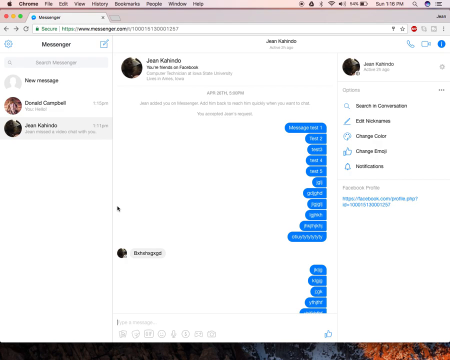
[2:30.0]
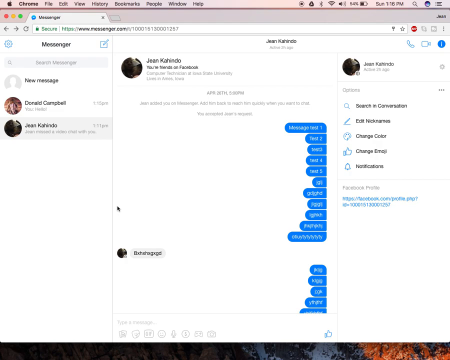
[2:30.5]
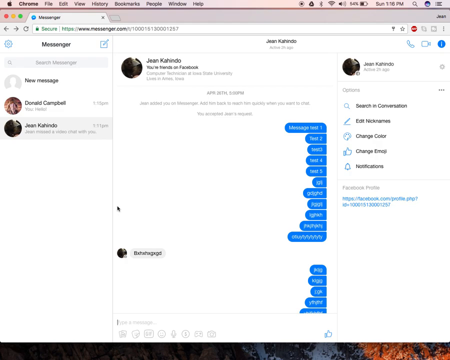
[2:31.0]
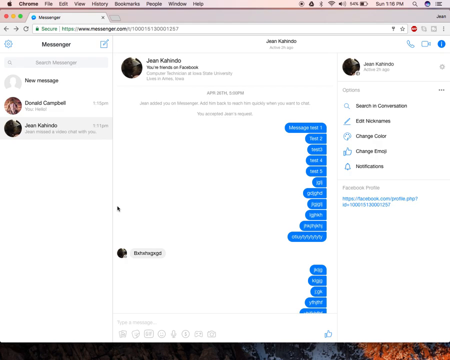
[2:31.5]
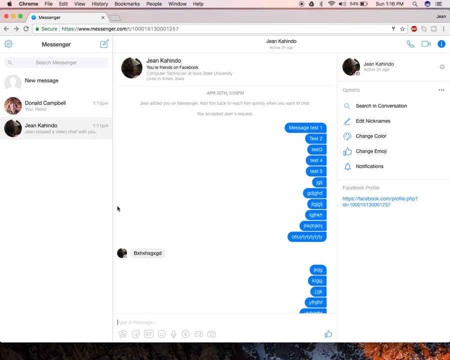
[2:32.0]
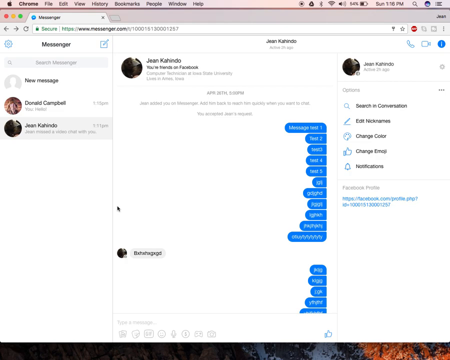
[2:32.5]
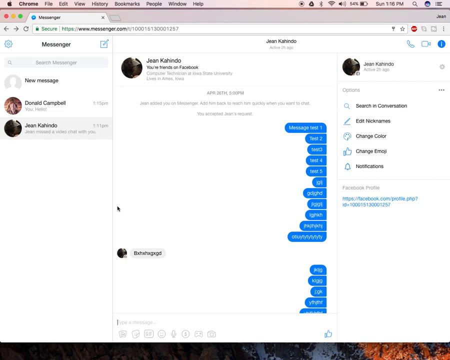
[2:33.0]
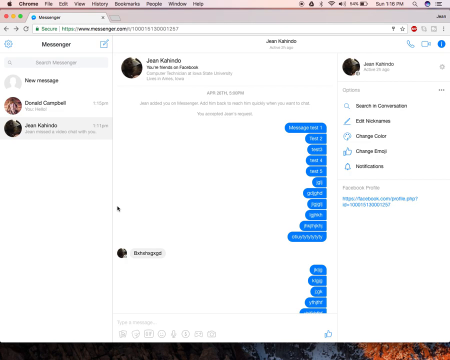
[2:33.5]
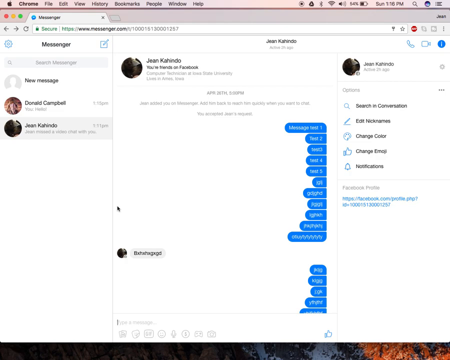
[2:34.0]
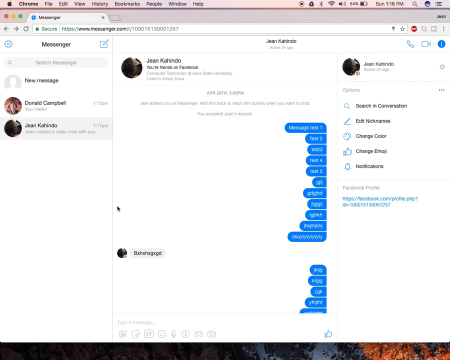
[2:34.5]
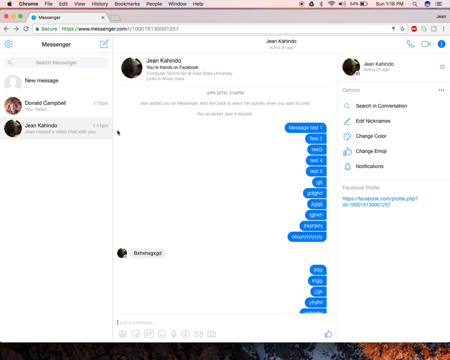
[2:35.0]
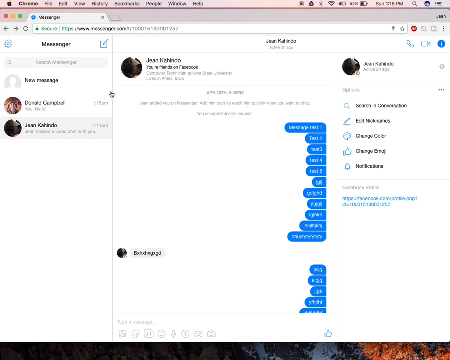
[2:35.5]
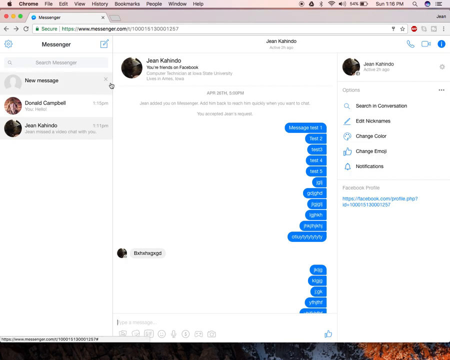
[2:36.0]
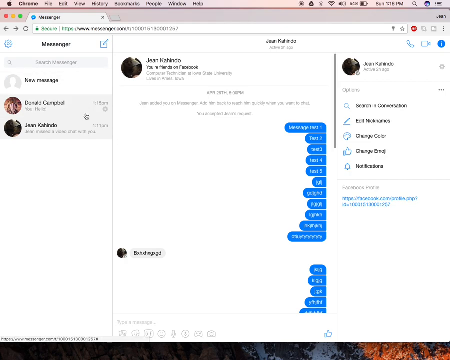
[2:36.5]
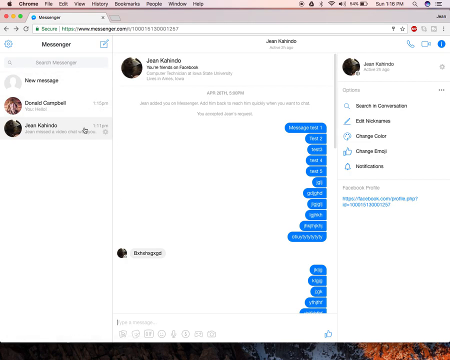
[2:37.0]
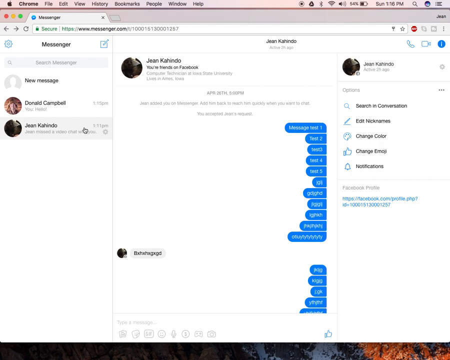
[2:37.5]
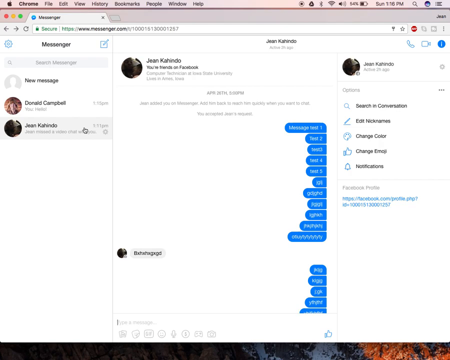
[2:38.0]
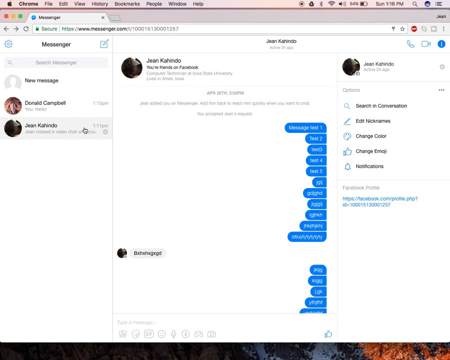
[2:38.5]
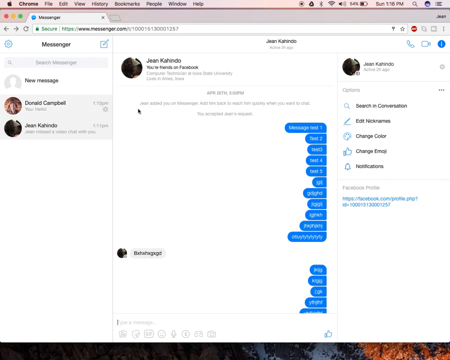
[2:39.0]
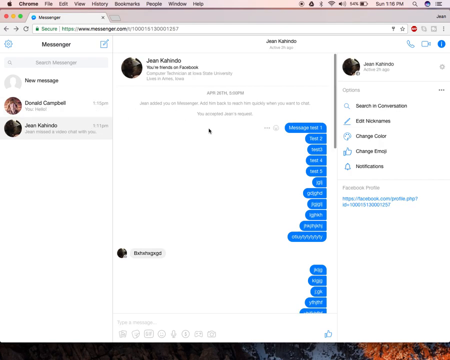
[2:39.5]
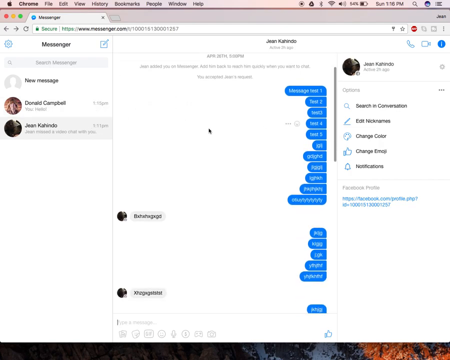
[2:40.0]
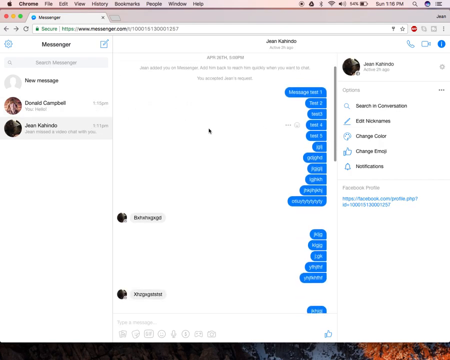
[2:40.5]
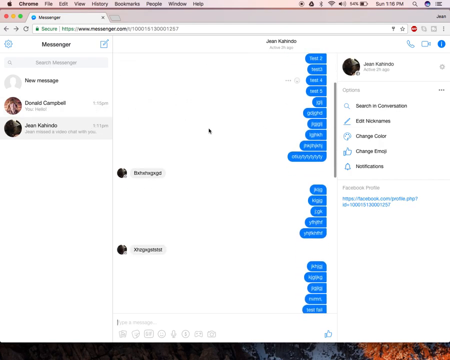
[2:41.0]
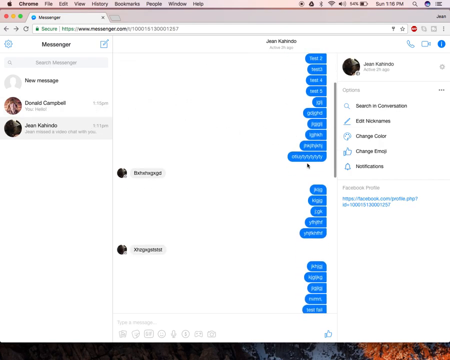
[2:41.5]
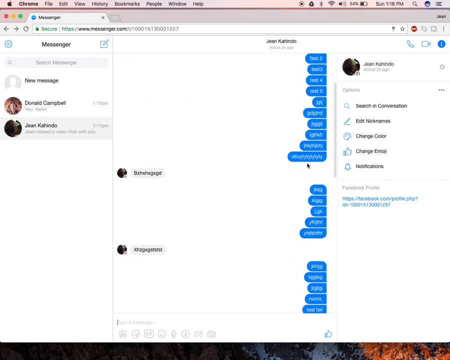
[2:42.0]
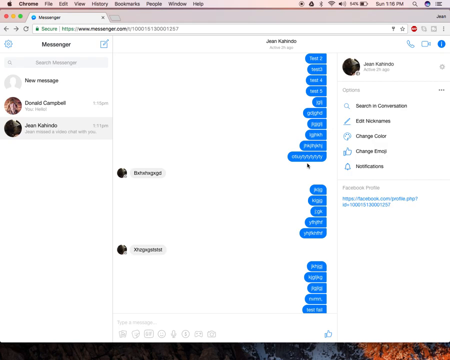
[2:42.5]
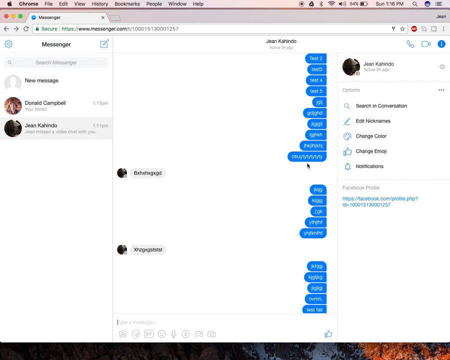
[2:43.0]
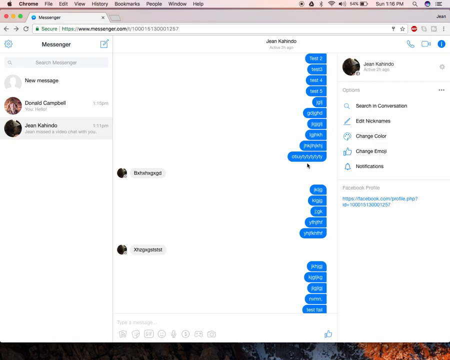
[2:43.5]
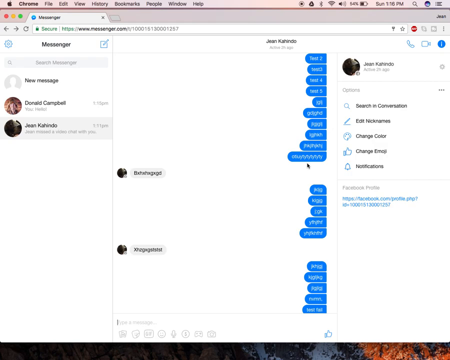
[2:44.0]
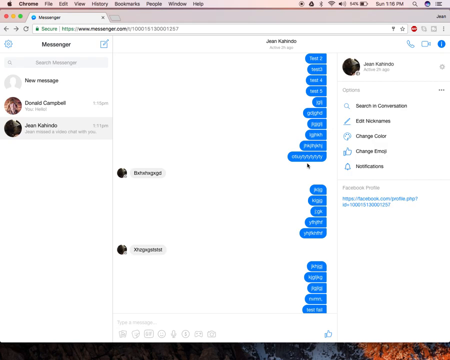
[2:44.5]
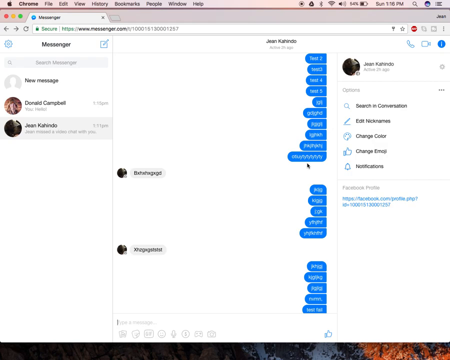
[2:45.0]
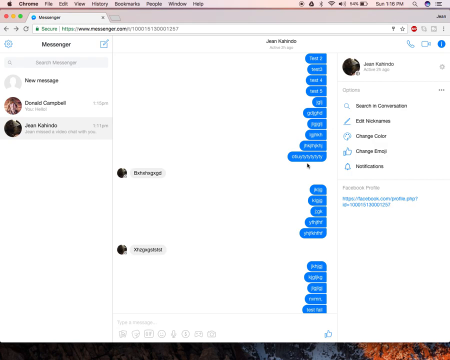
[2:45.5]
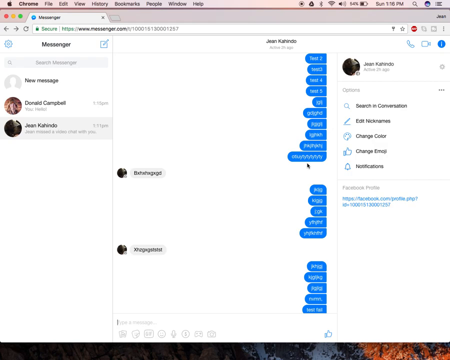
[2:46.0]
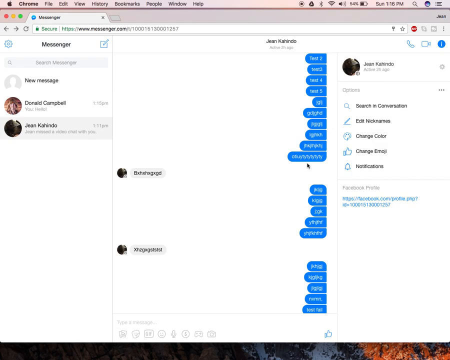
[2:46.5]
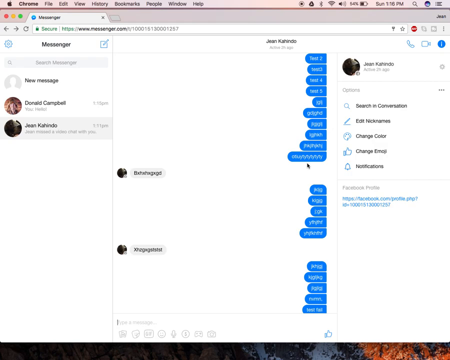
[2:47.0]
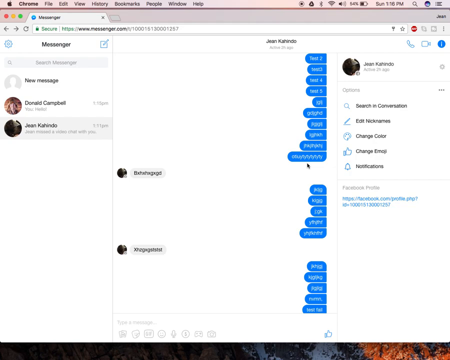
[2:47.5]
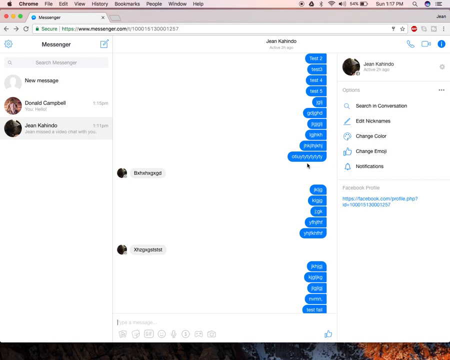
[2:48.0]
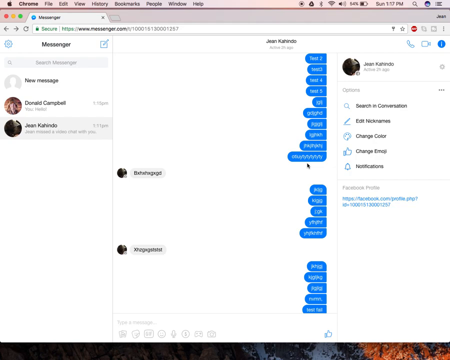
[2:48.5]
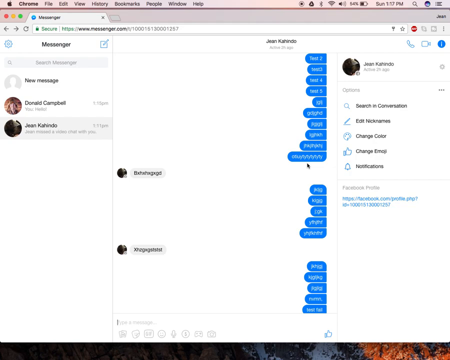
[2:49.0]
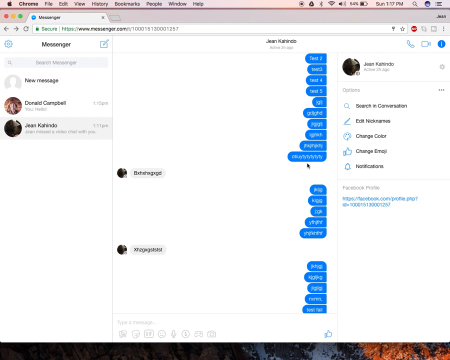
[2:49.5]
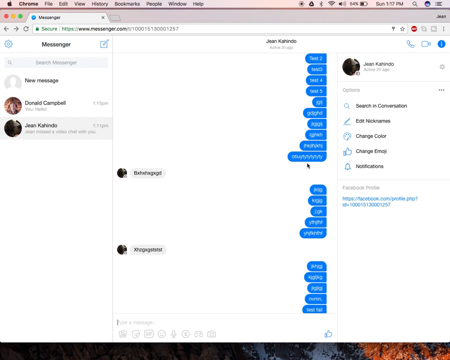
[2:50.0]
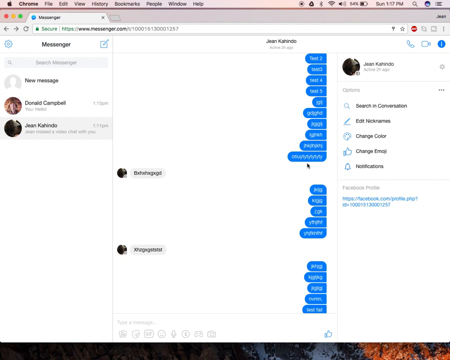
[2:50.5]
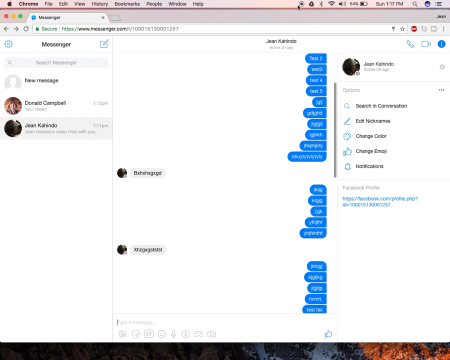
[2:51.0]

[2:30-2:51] The Messenger window shows the stored conversations with different people, including chats with Donald and Jean, along with an option to start a new message.